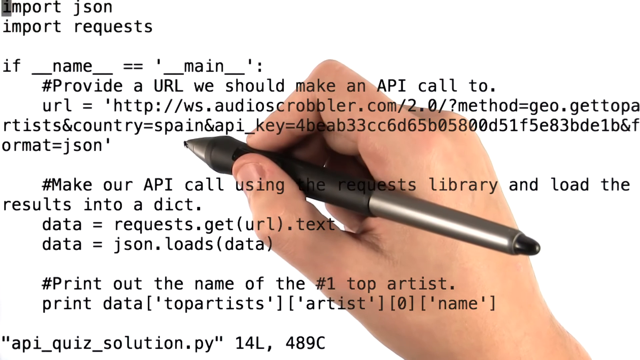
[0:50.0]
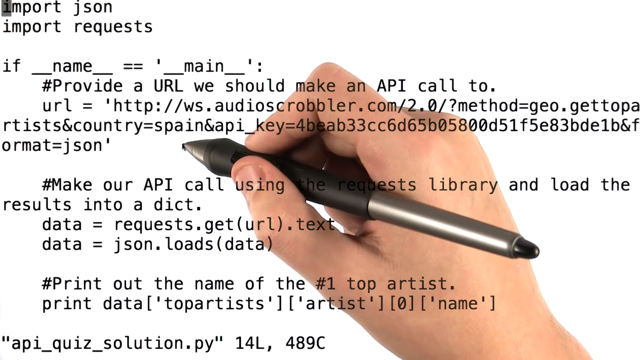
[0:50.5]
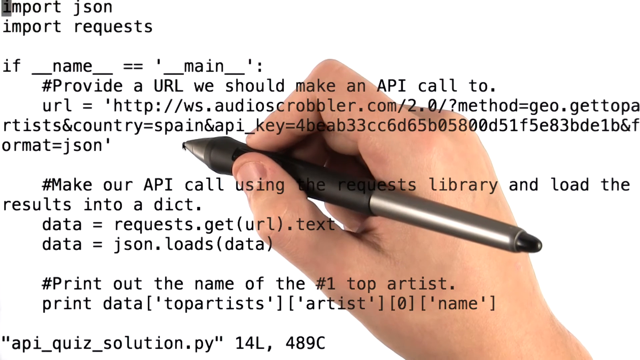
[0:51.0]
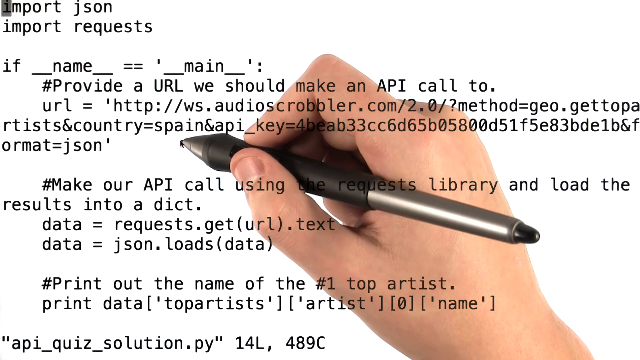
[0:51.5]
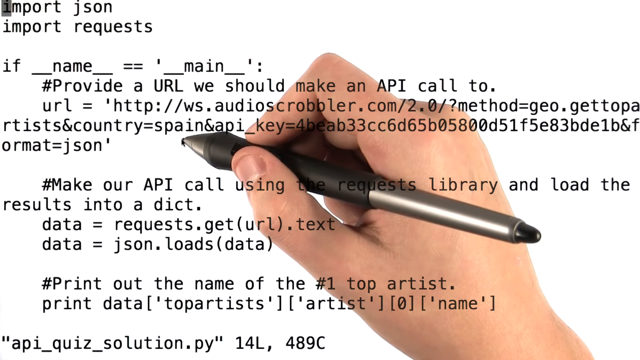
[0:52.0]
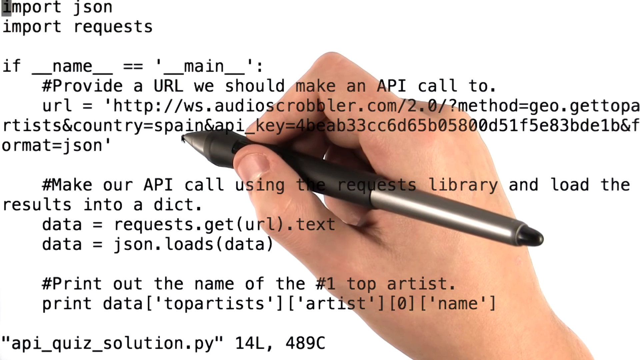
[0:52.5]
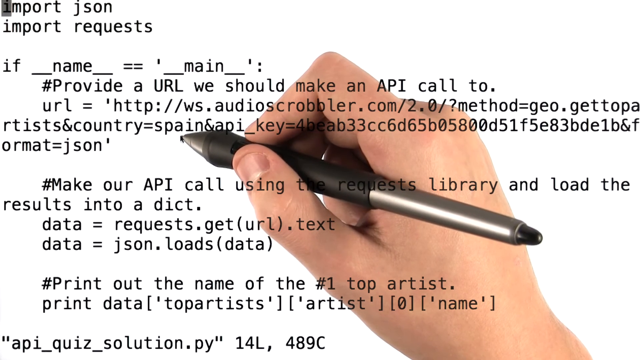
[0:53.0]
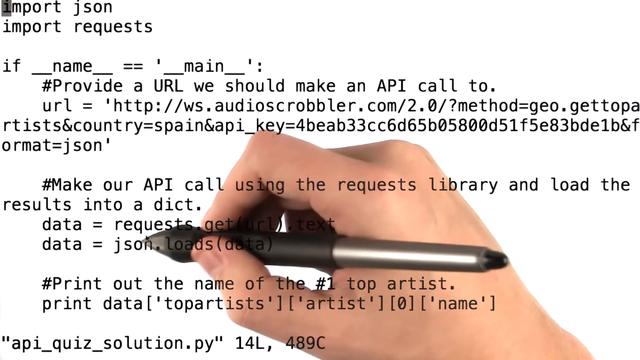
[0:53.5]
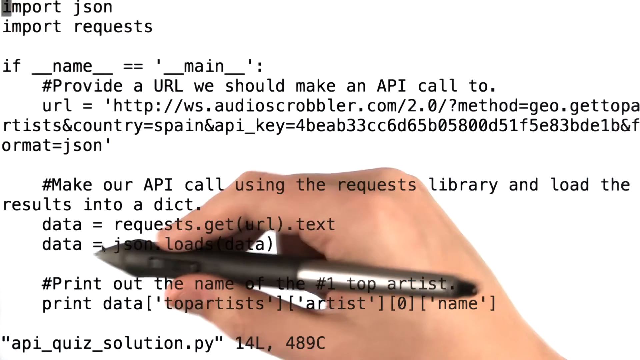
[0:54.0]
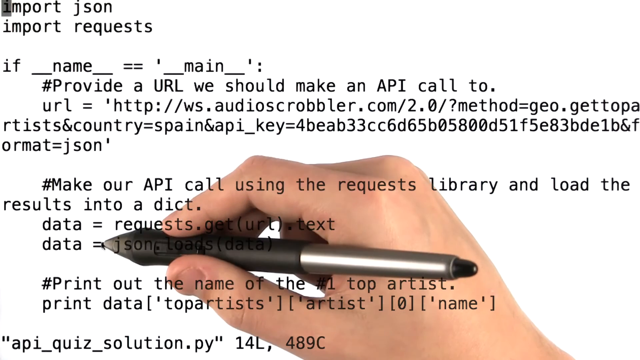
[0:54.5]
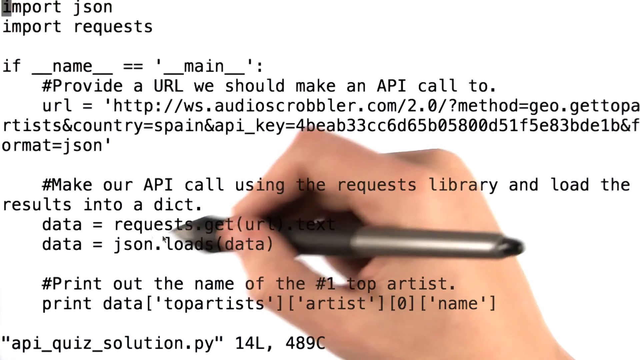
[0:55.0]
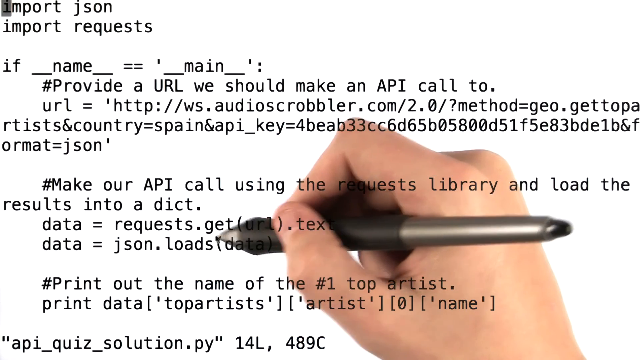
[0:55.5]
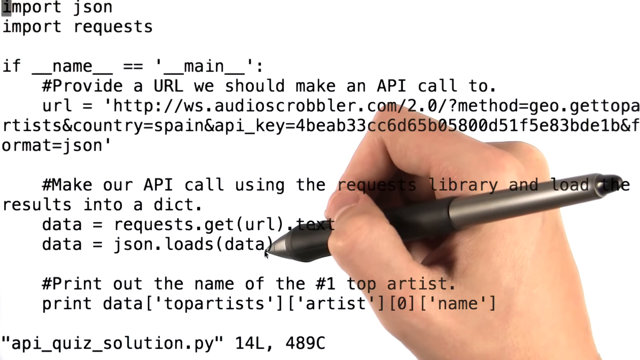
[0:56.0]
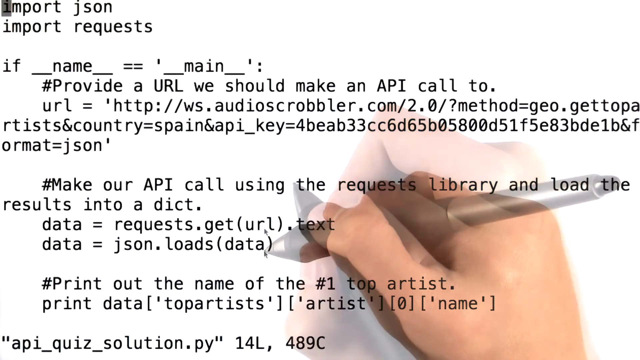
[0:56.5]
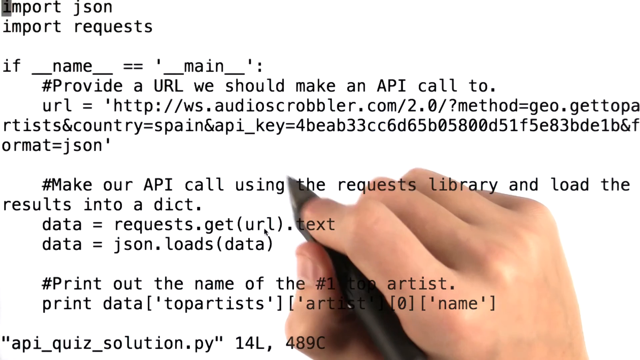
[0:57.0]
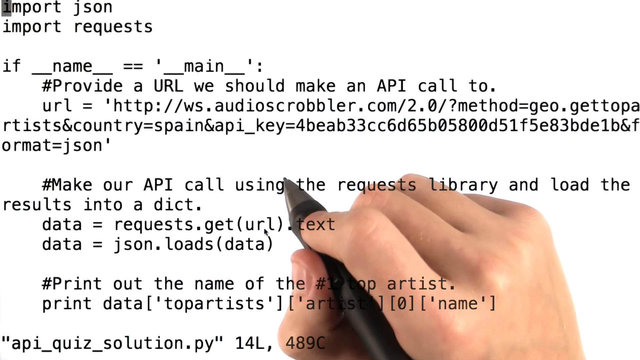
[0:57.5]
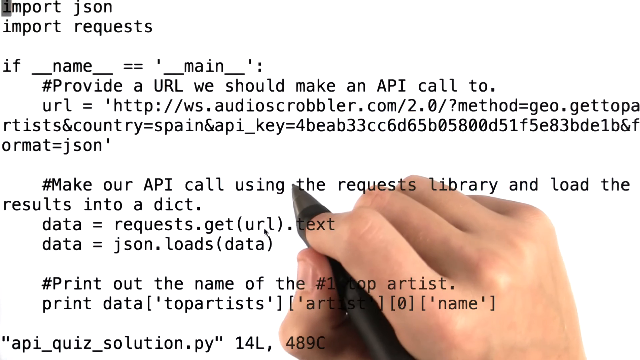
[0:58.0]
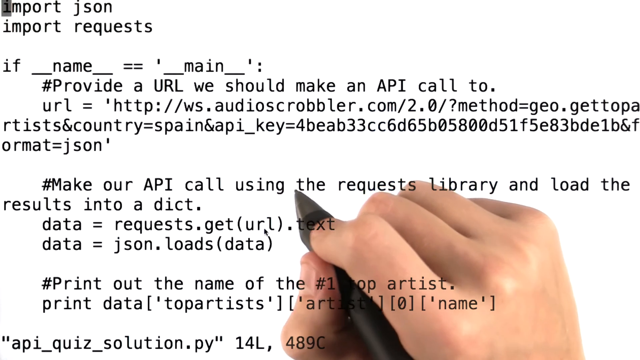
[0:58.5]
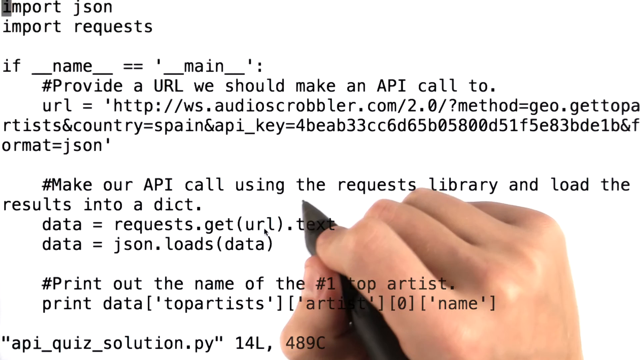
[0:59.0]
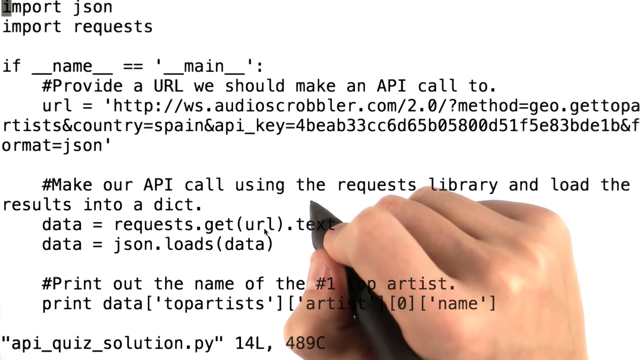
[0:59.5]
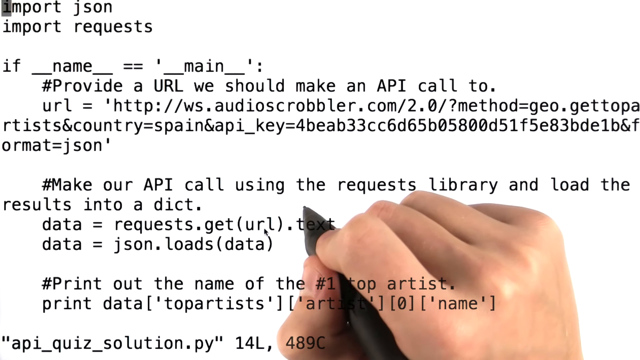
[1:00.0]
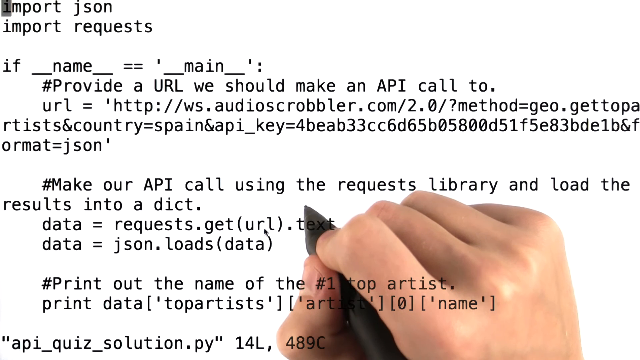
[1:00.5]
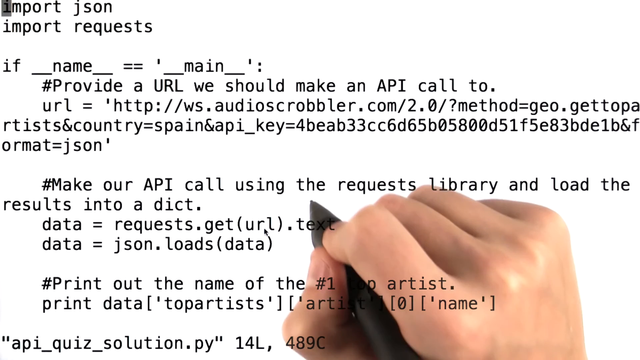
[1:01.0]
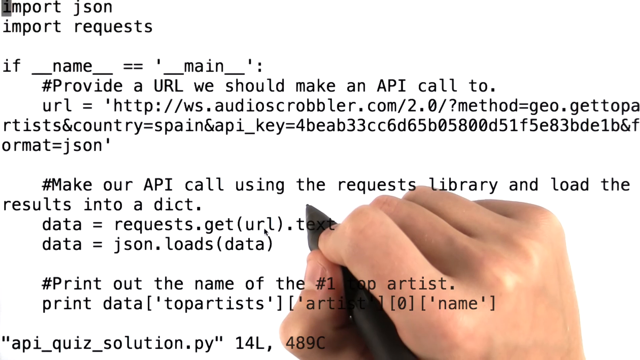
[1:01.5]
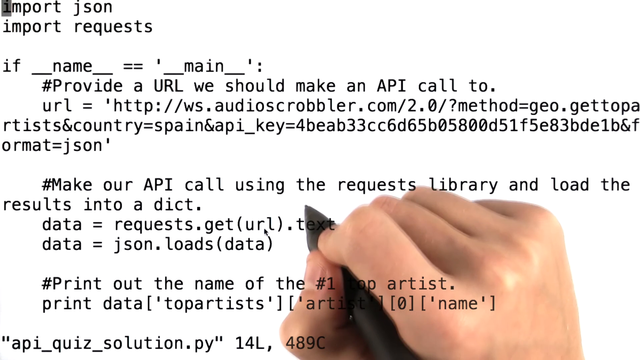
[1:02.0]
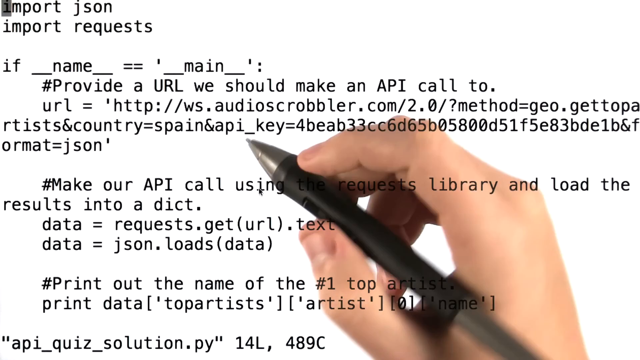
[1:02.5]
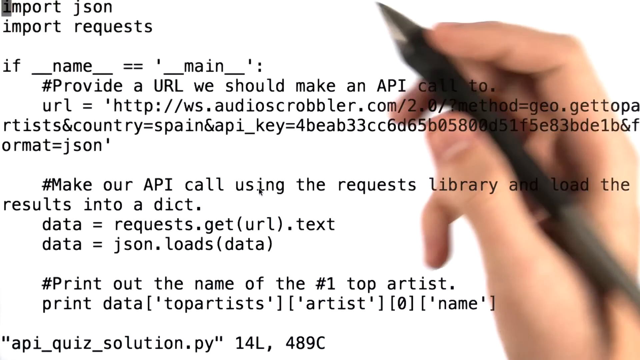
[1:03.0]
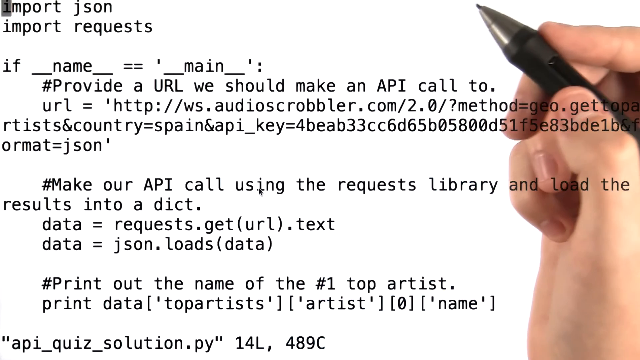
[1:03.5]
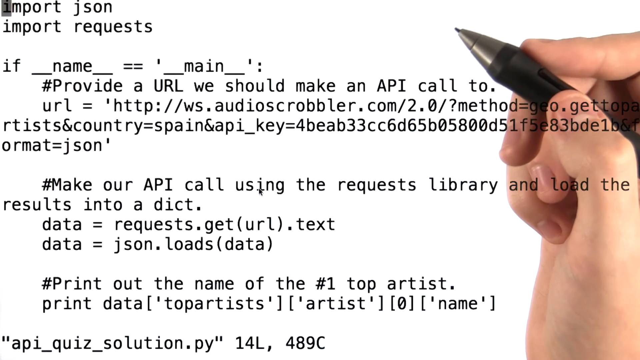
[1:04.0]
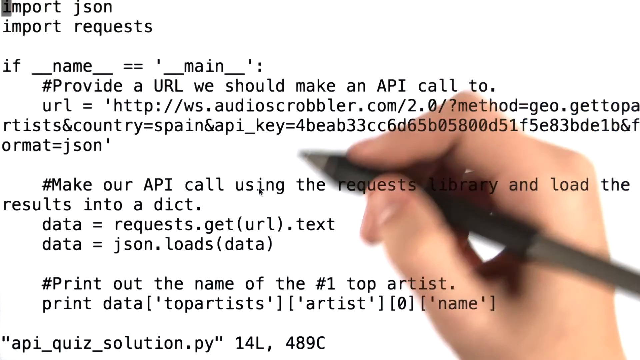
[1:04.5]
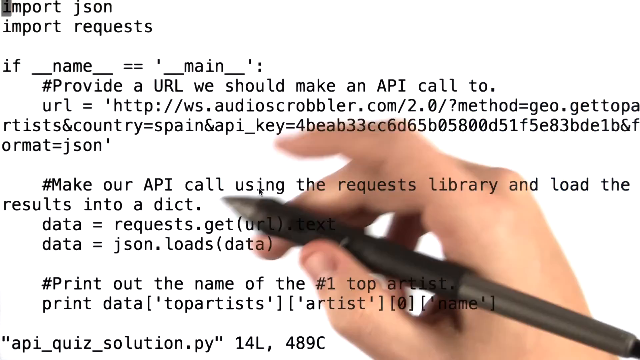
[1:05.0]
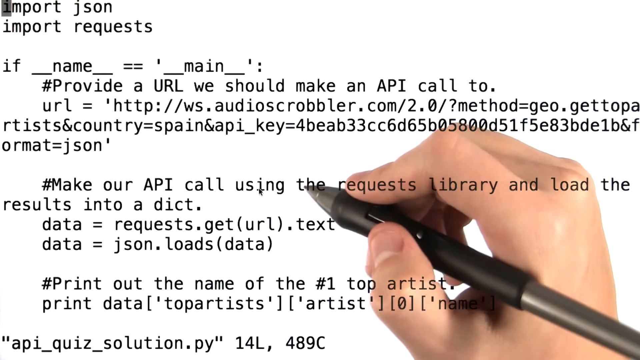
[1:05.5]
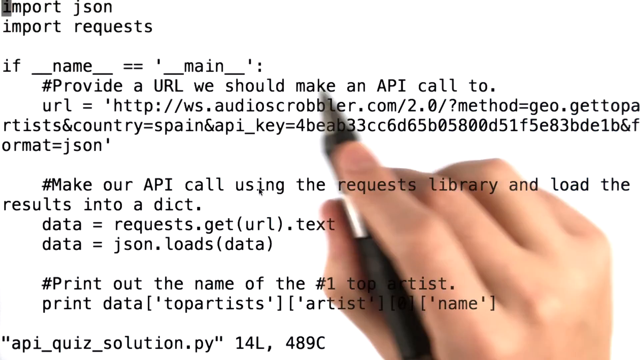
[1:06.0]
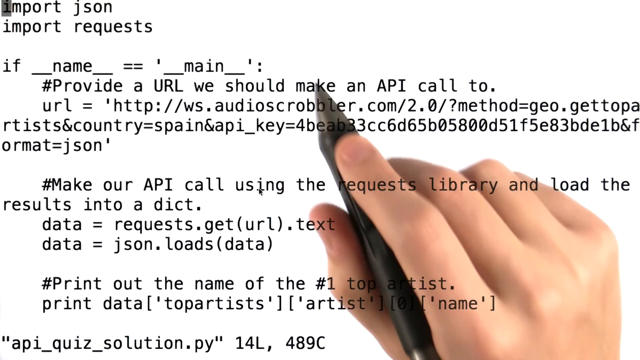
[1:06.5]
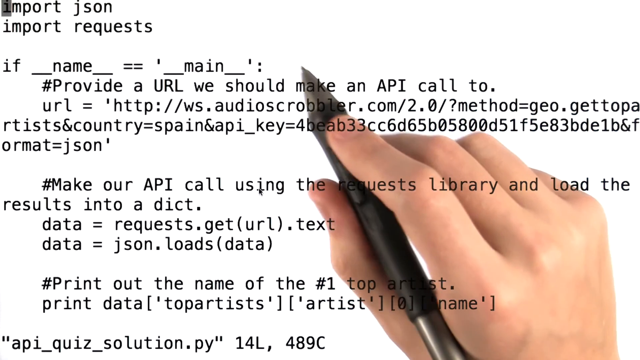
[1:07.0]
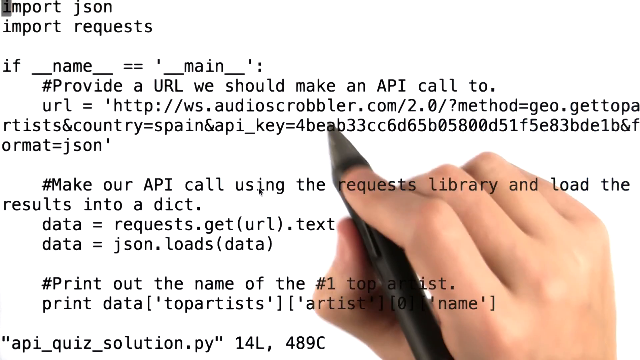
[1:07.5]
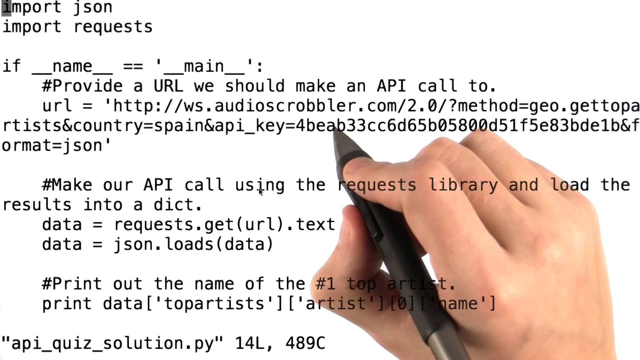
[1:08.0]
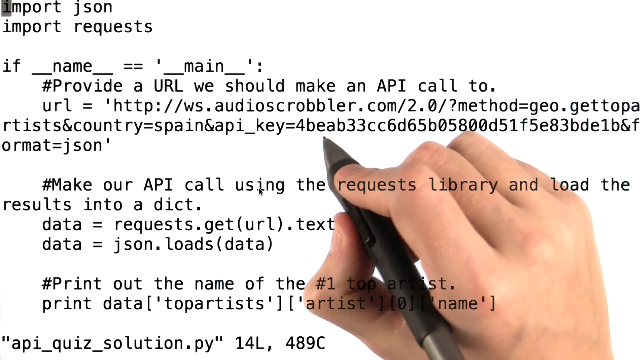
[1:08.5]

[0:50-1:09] A black pen with brown on it writes on the whiteboard; the pen is described as black and silver in color. The recording possibly resembles a screen recording. The background is white. The pen points to the words "make", "name" and "load the results into". Text mentioning requests and loading data is also shown.